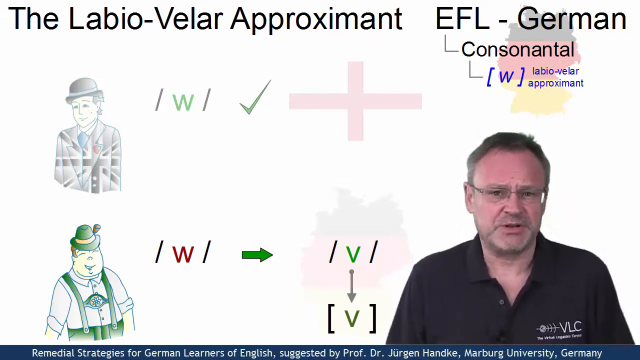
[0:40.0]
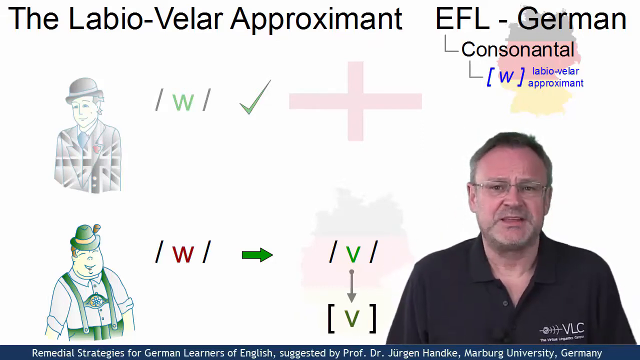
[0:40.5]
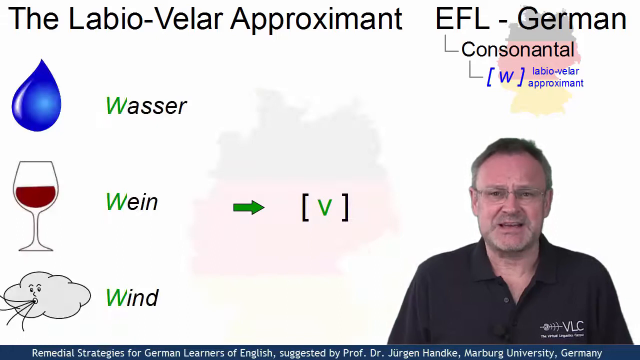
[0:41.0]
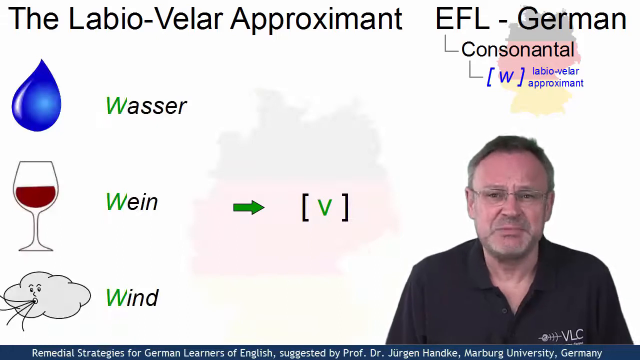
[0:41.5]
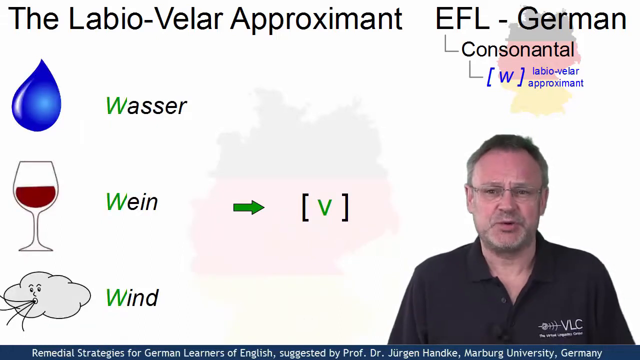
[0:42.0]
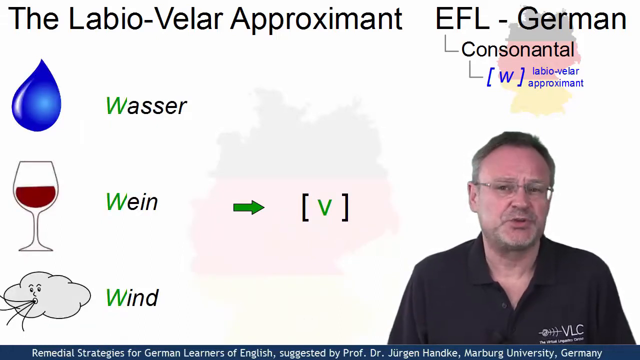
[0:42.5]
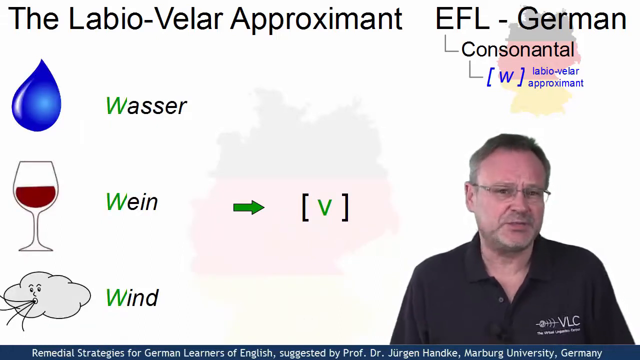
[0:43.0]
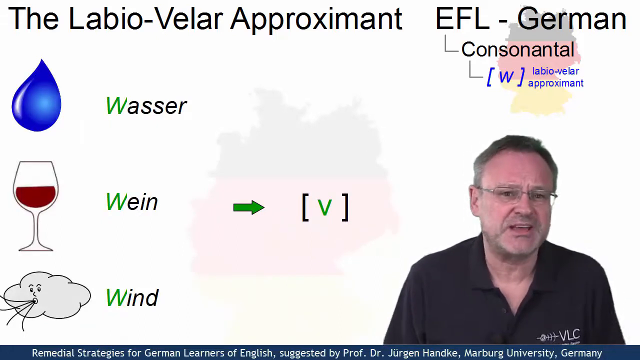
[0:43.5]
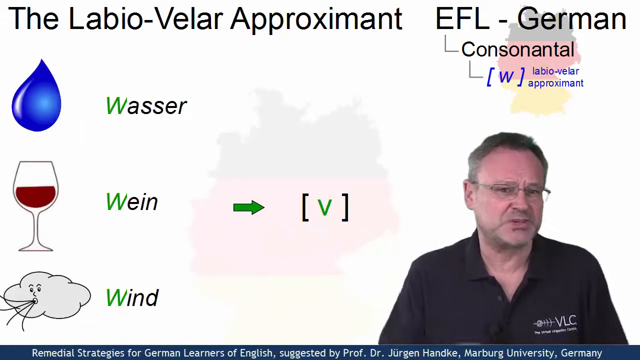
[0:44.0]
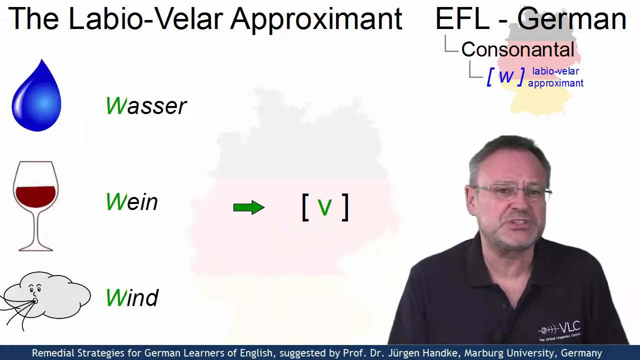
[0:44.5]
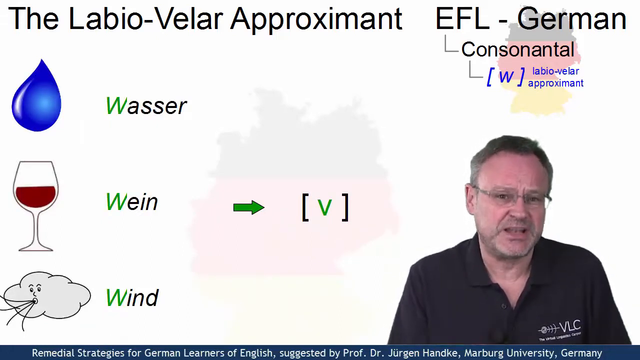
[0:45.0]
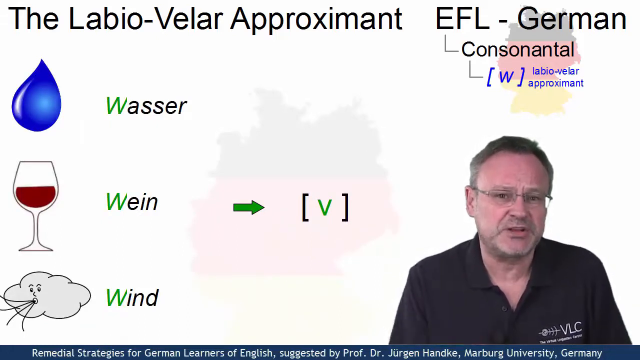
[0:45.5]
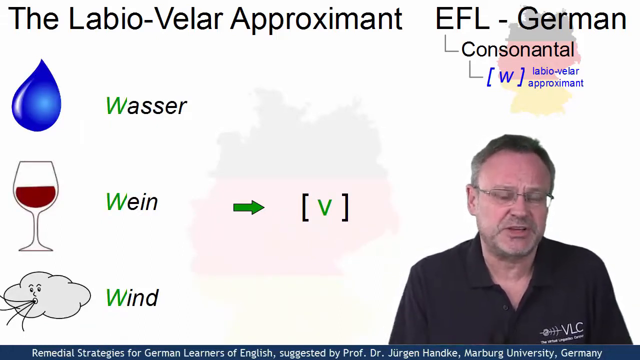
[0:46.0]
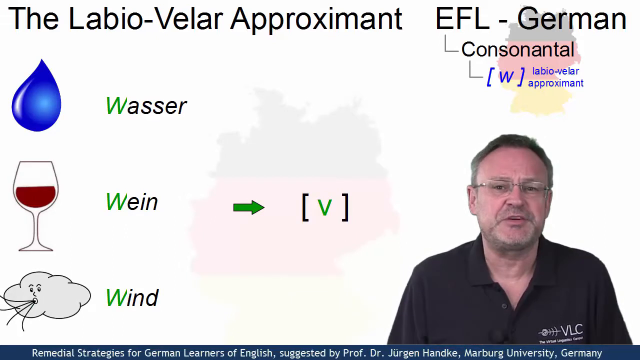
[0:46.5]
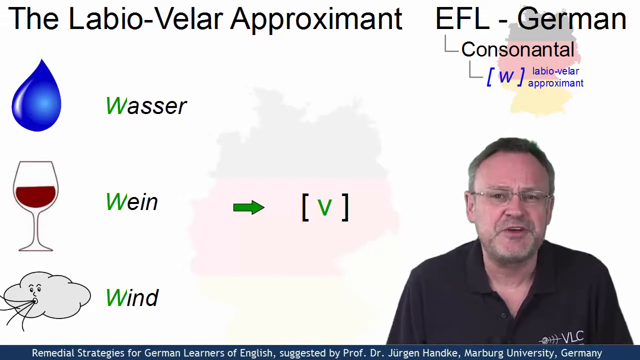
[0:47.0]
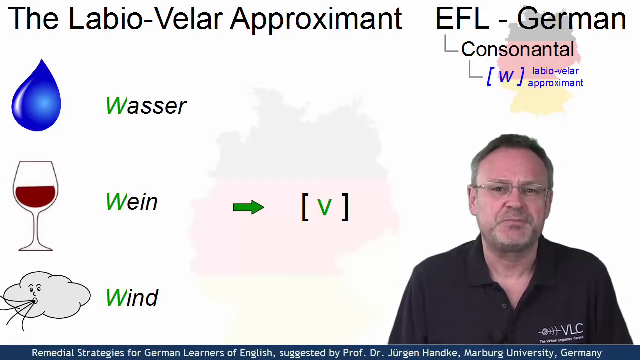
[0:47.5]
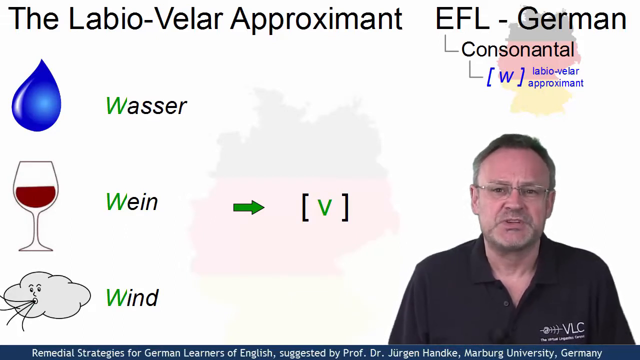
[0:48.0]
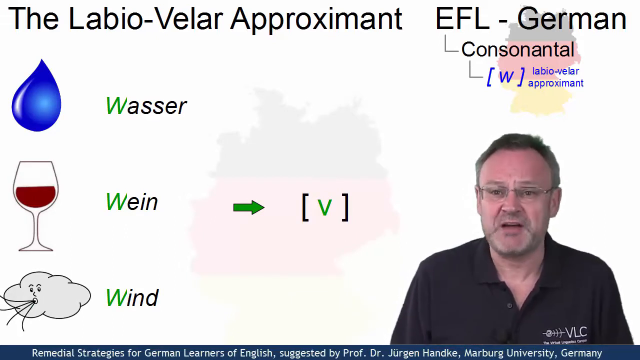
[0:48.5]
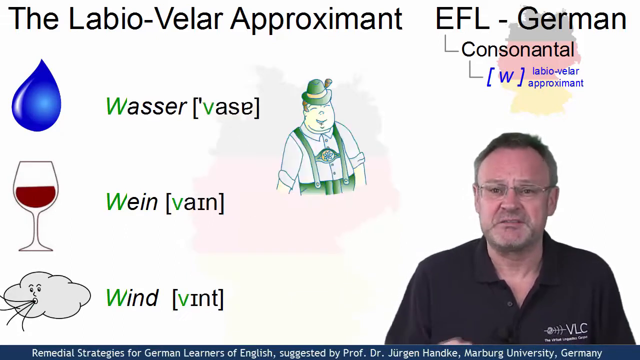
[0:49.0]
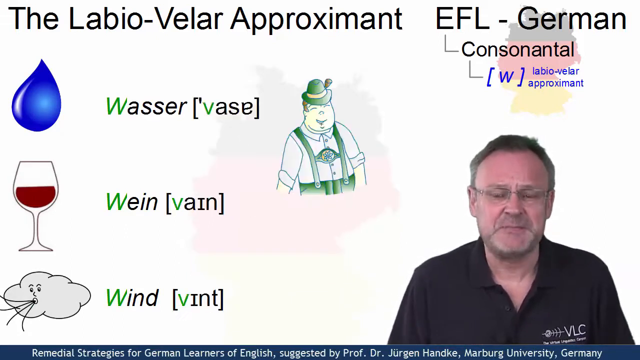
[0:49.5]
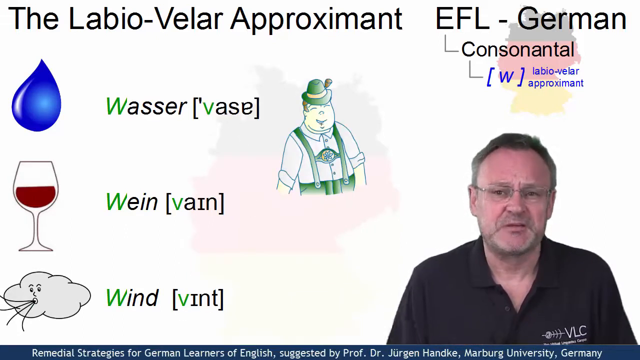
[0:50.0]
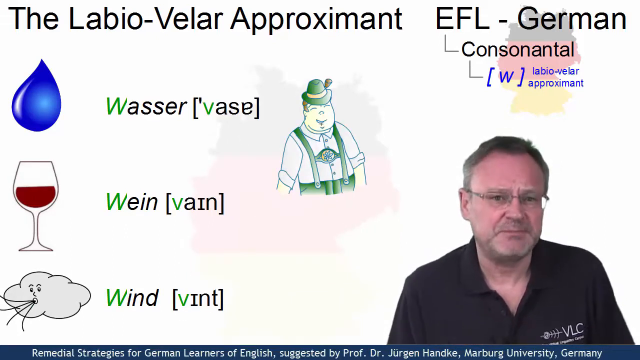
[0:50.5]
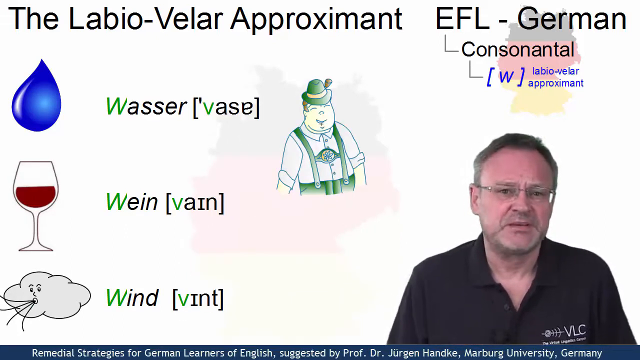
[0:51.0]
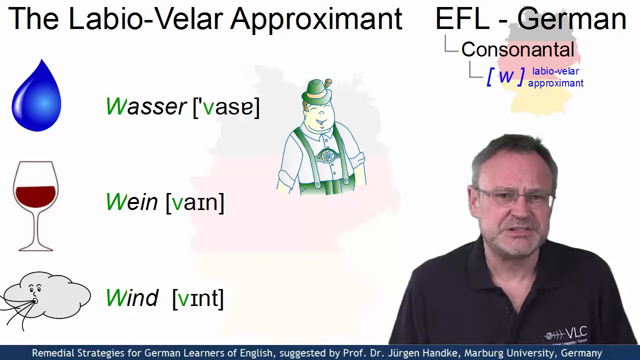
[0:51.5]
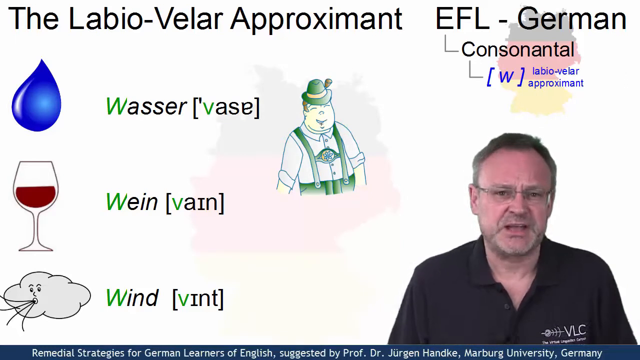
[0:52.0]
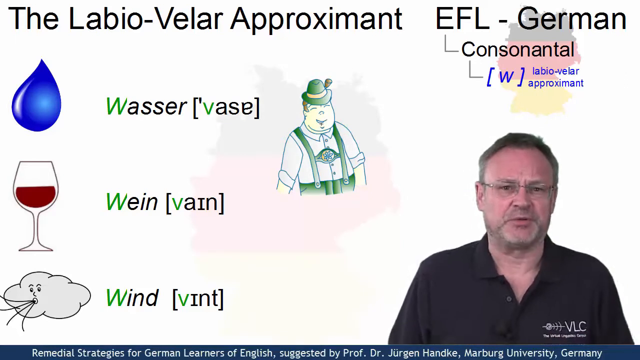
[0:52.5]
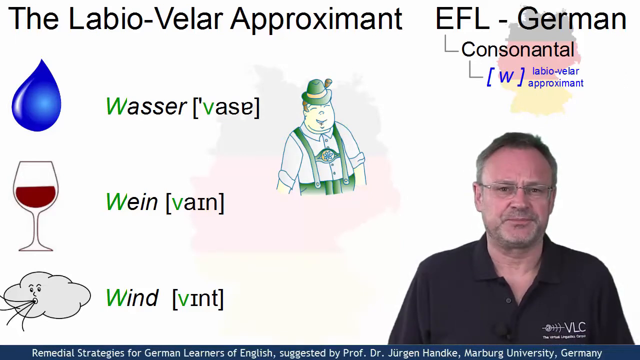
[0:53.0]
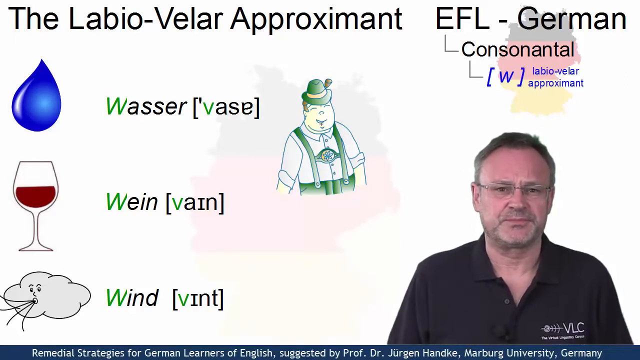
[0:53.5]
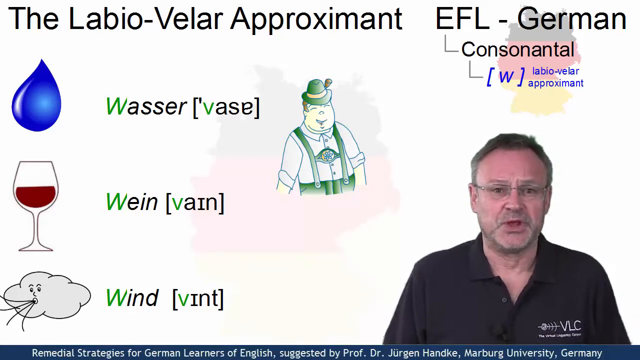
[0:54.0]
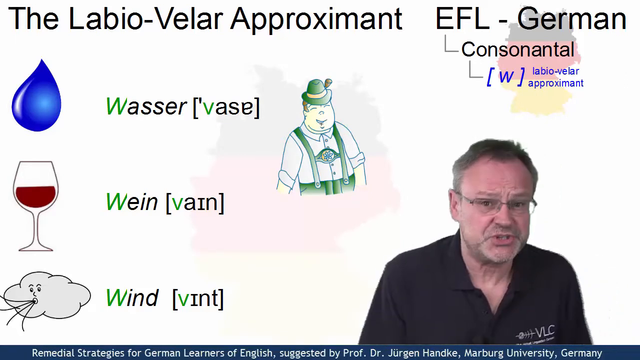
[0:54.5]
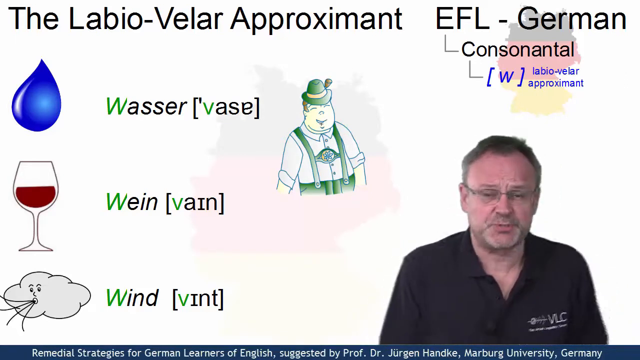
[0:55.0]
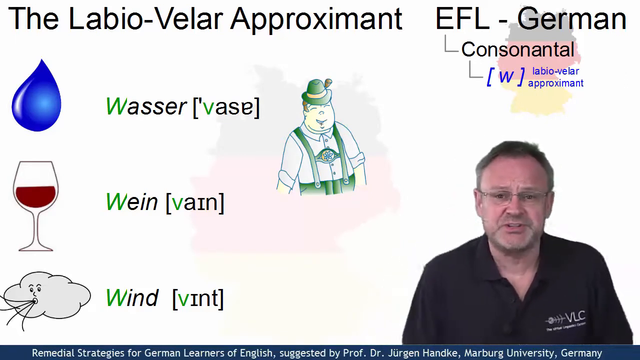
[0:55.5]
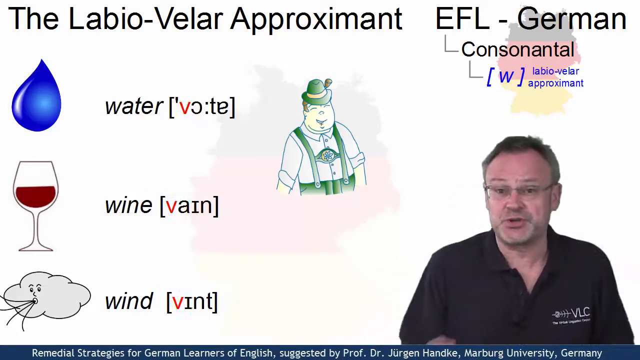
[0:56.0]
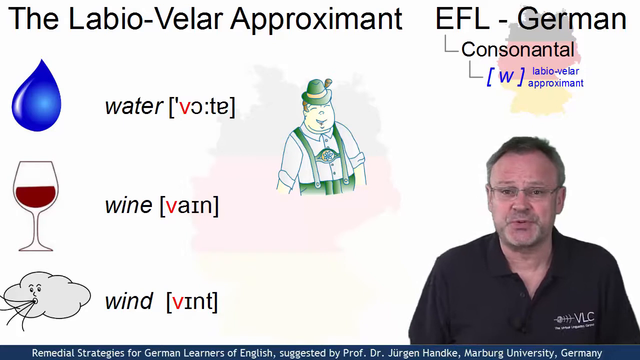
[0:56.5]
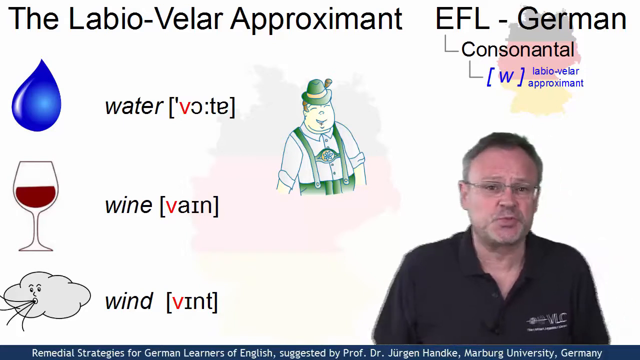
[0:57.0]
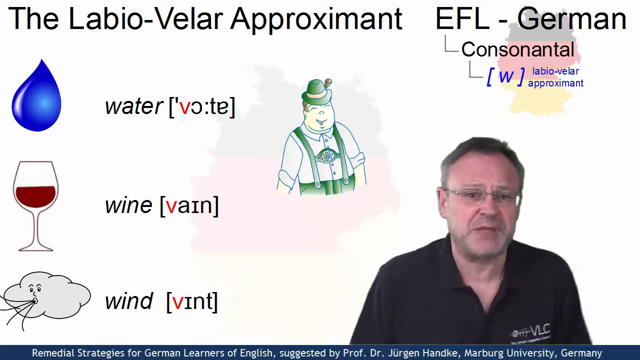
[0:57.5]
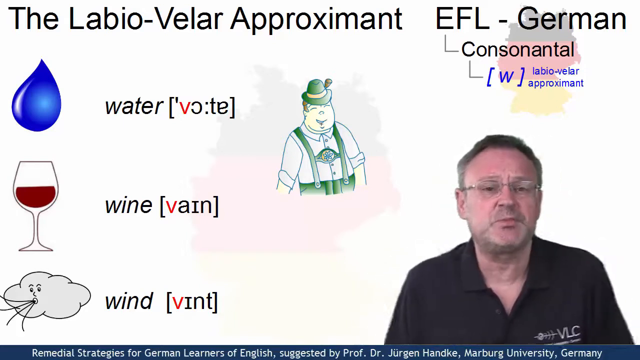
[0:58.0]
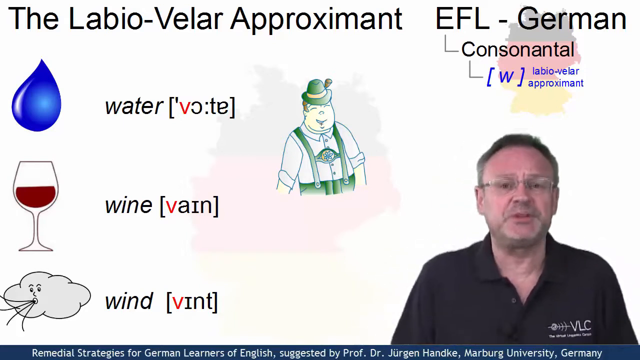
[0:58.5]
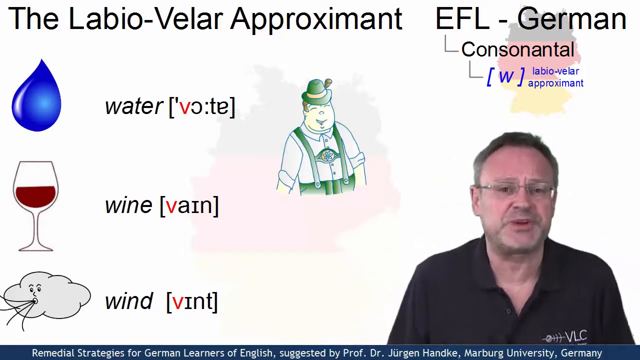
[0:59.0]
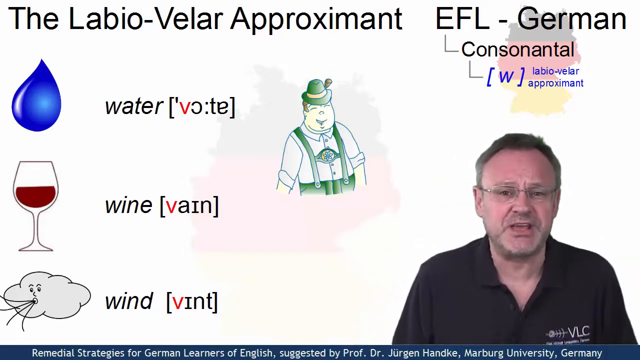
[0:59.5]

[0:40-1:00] The man moves on to Wasser, Wein and Wind, with the V sound in square brackets, showing how the pronunciation of the words changes. There are hand-drawn animations of water, wine and a cloud. Two men on the screen, one in a black hat and one in a green hat, also seem to be hand-drawn. The text is simple and standard. The man seems to be a language professor.